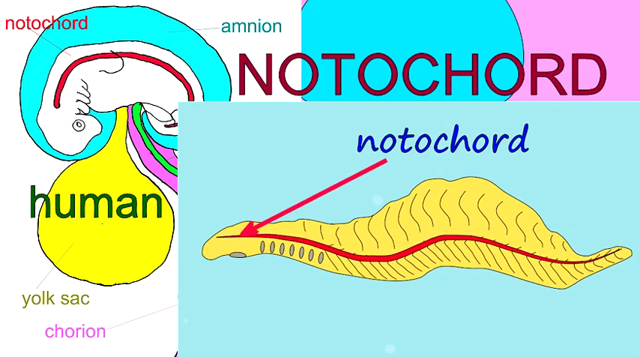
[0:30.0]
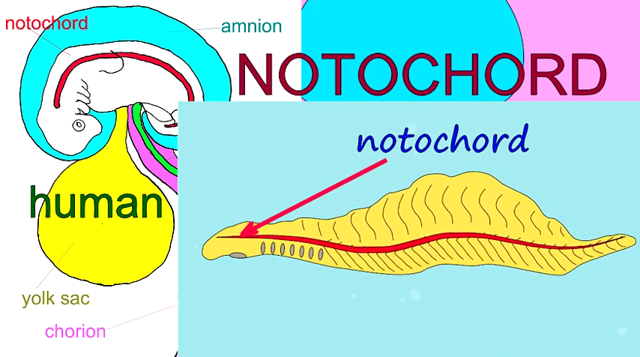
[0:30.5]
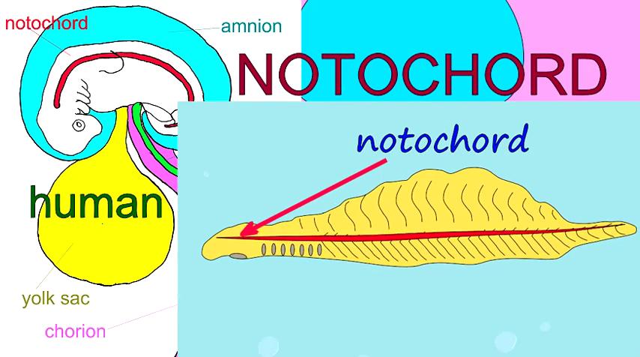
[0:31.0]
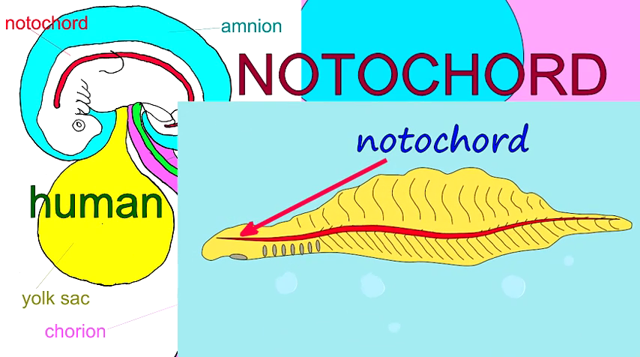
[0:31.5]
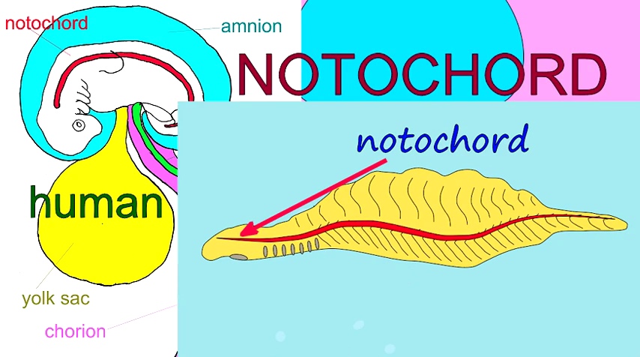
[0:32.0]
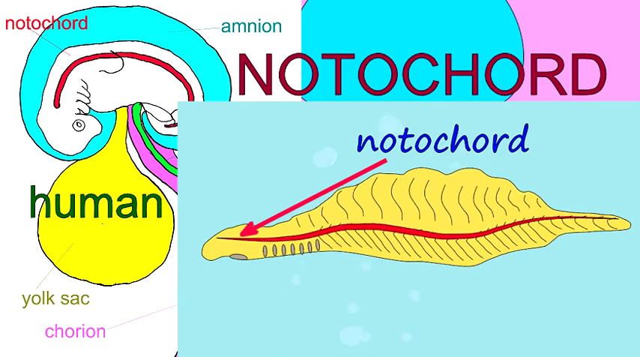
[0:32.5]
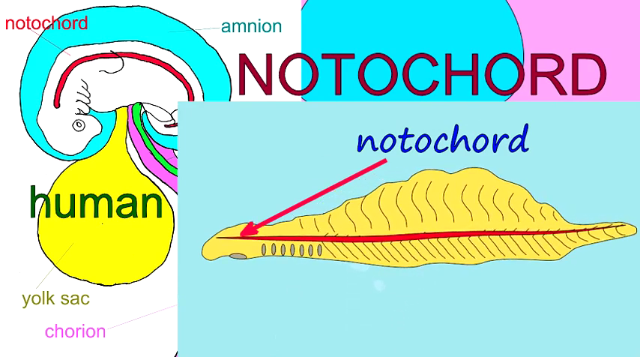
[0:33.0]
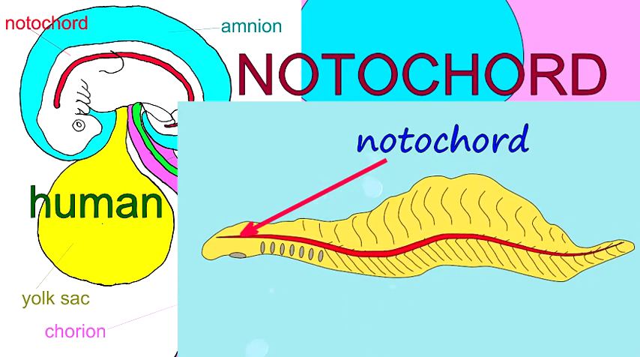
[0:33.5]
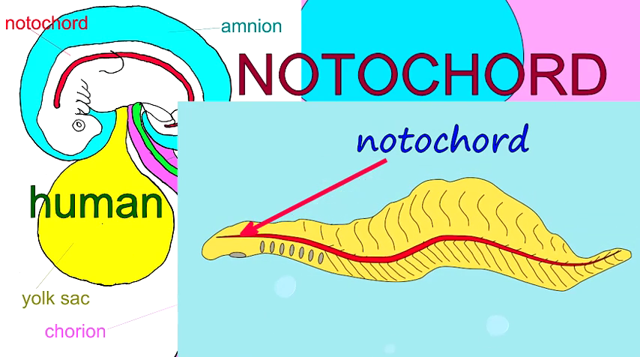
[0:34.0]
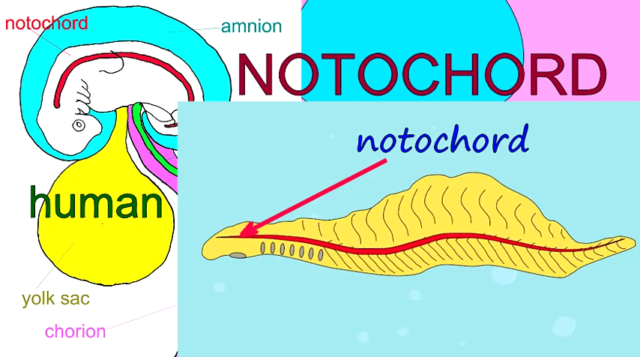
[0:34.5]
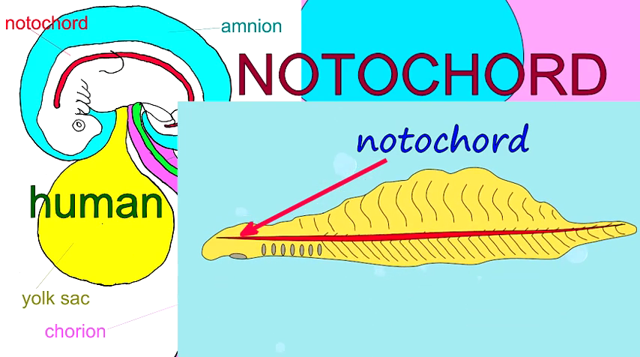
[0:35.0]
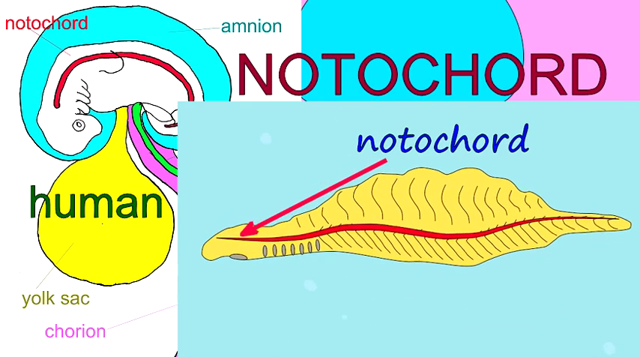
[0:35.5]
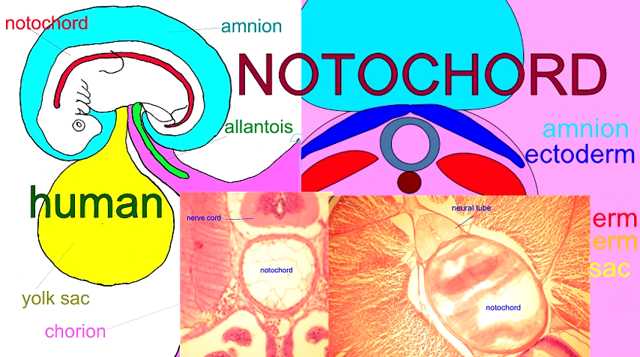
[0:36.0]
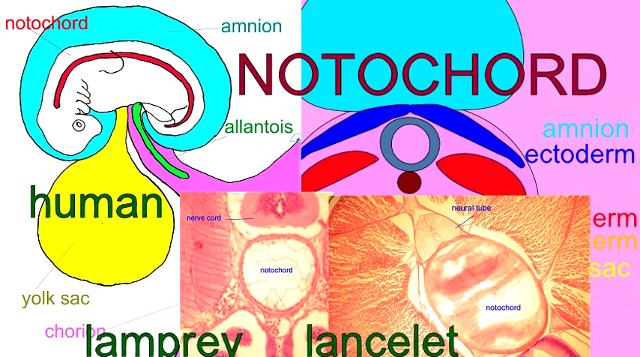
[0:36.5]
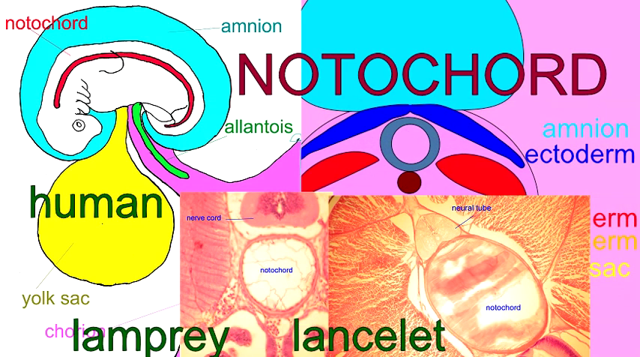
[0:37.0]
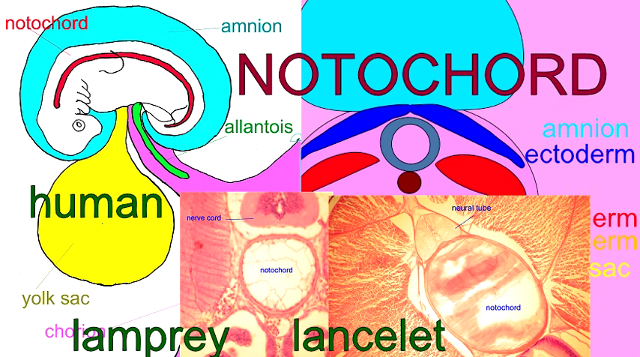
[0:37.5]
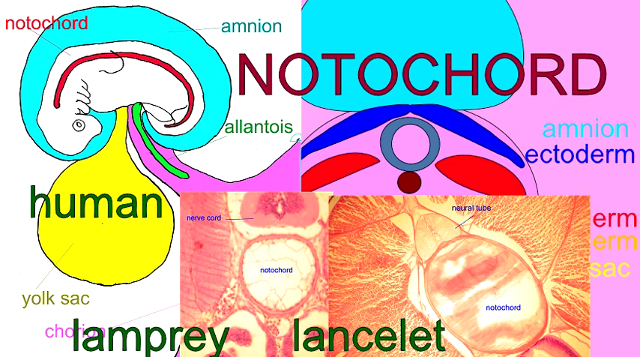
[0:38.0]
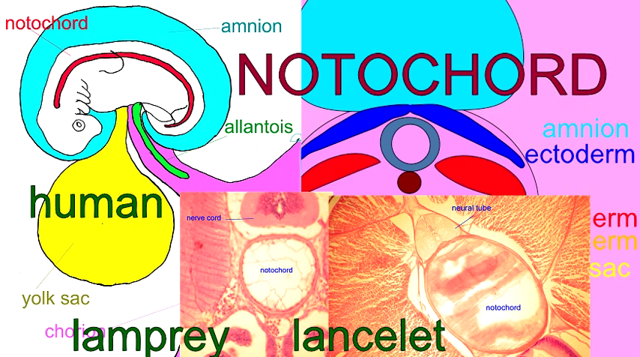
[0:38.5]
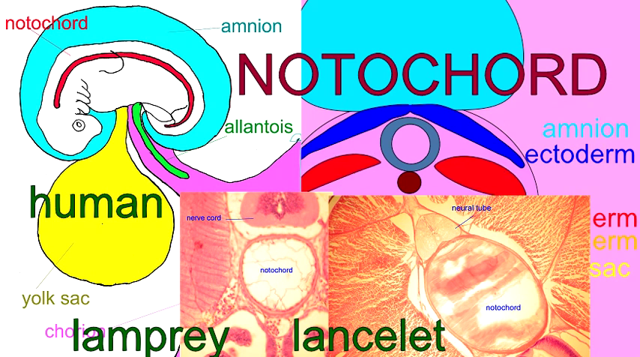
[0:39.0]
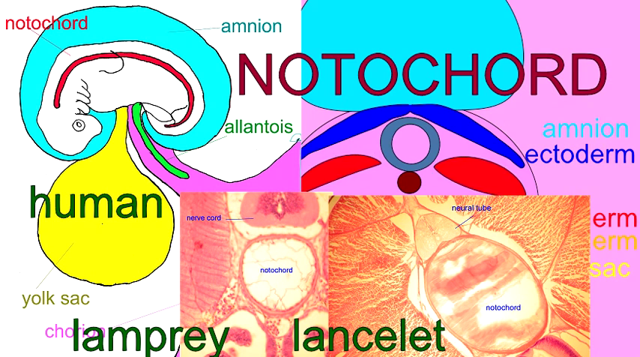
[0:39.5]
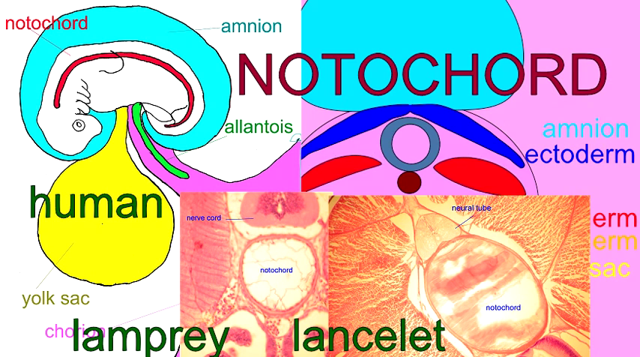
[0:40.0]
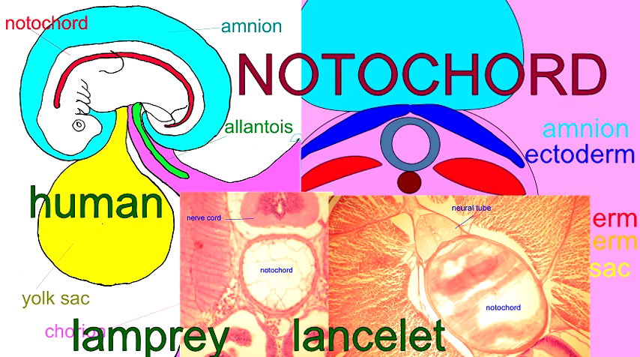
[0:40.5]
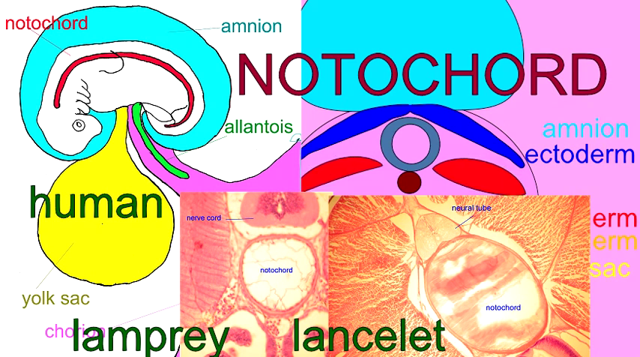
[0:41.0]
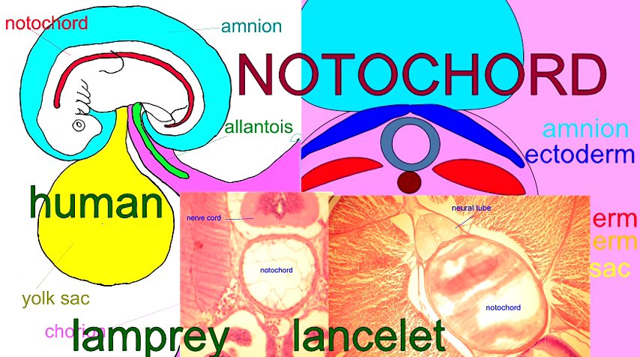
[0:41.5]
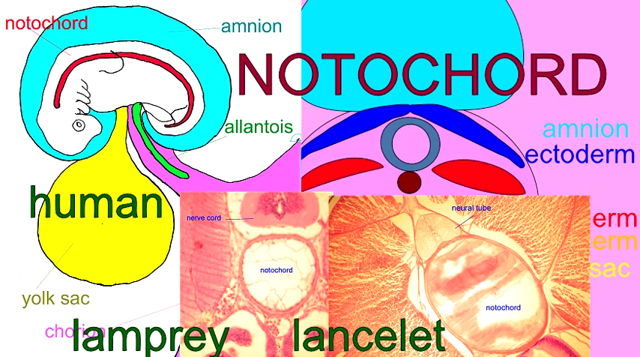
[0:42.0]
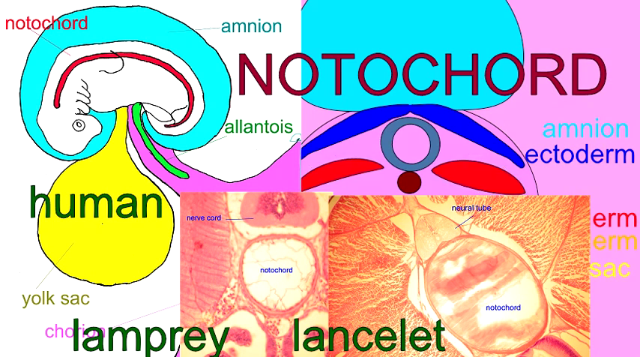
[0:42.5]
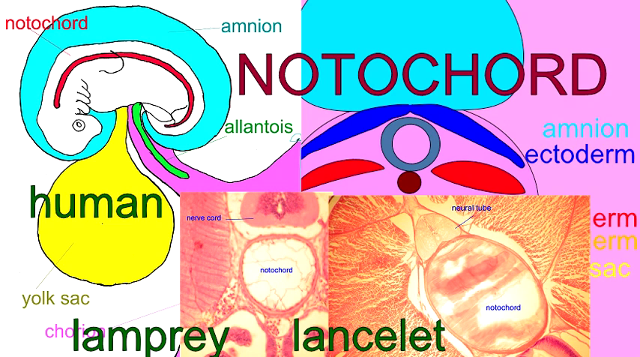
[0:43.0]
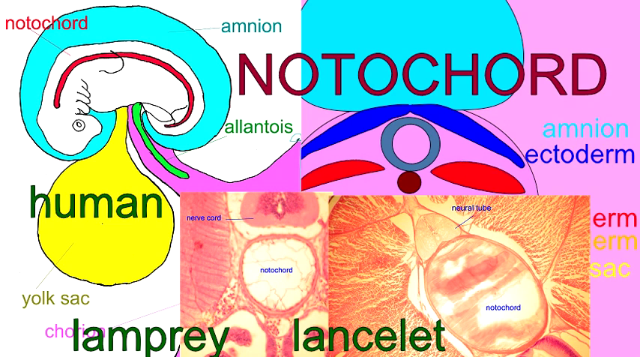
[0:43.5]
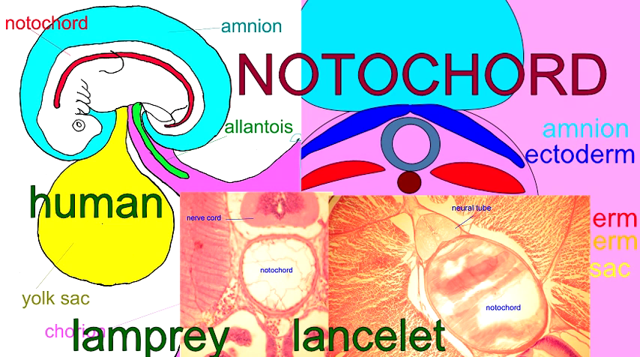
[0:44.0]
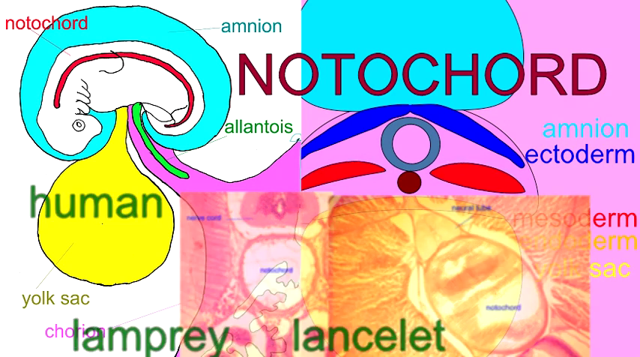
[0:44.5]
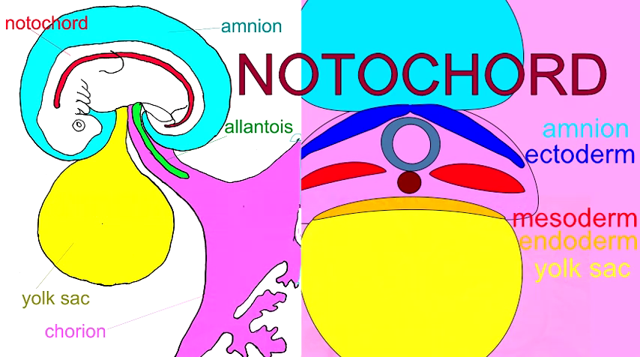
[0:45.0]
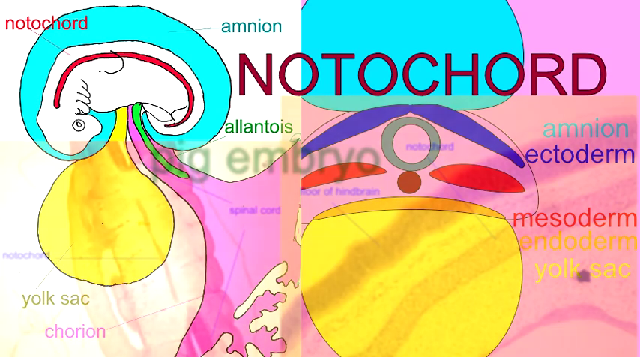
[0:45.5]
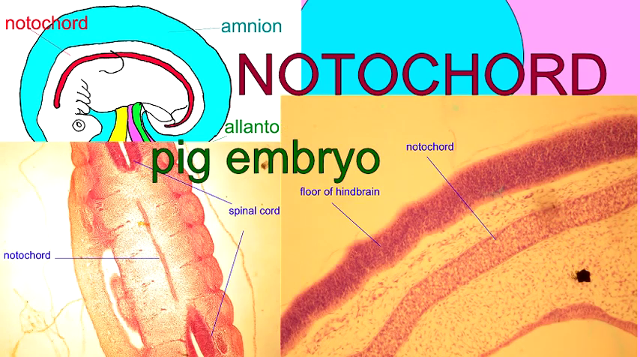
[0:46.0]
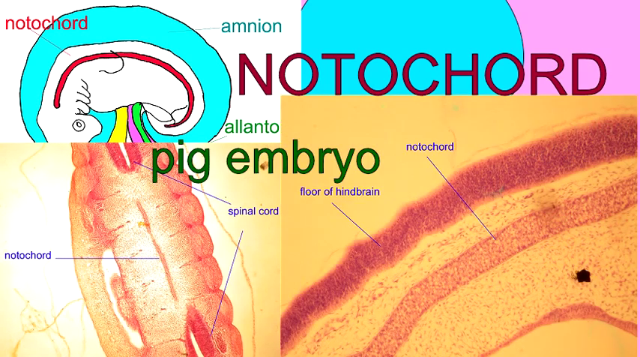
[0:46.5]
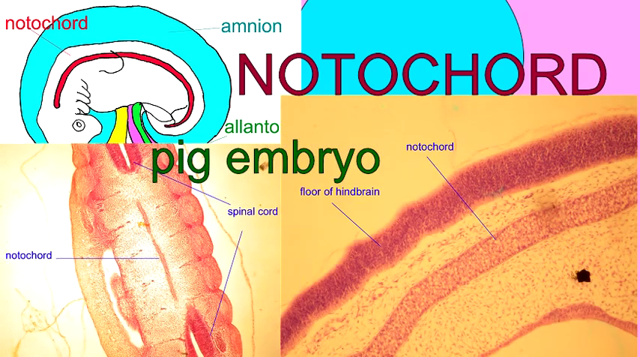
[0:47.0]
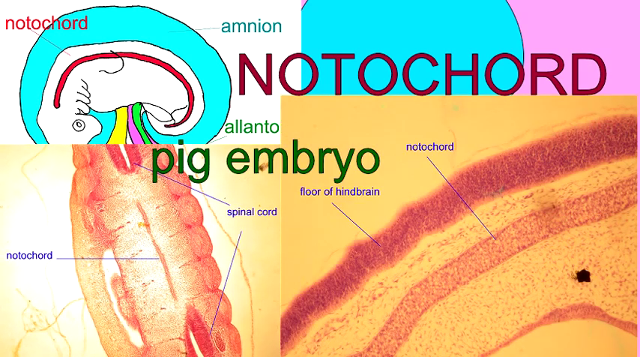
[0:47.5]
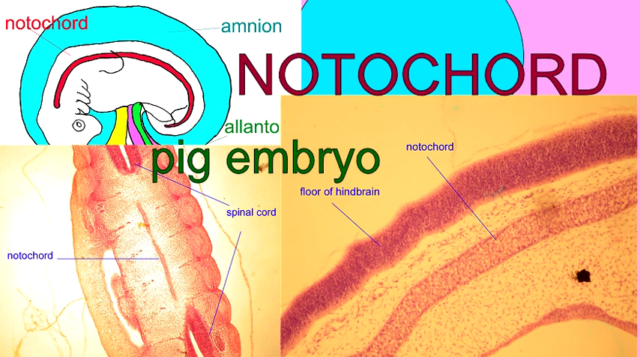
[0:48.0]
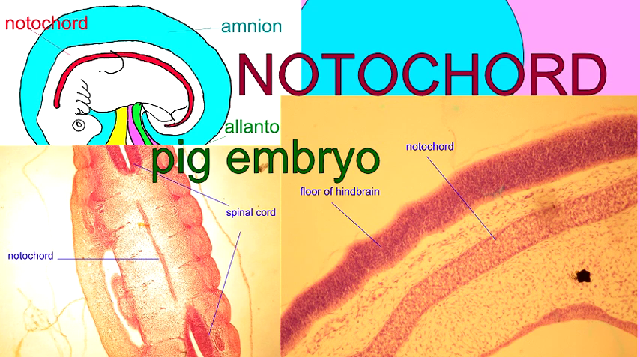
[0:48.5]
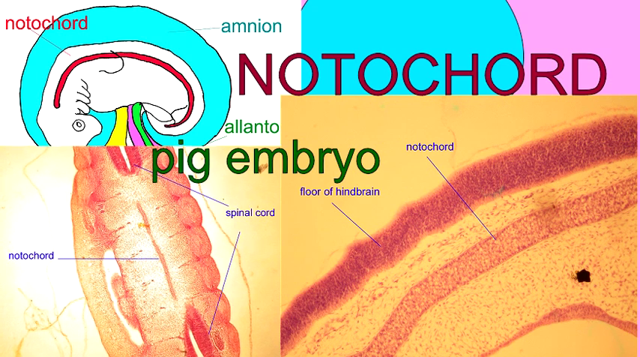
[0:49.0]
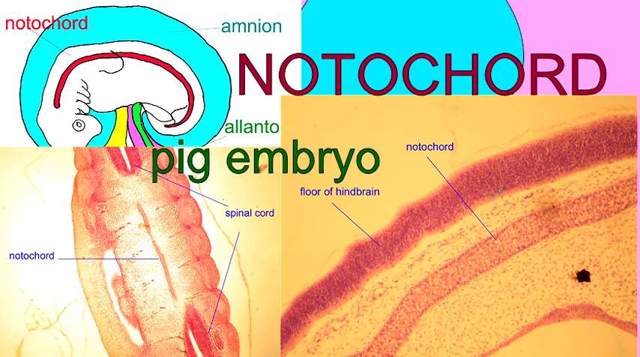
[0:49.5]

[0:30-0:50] A red arrow points to a yellow item lying on the screen; it is the red line running from the front to the back. On the left side of the screen is a human, with the embryo inside the body. The aminos is shown around the embryo, and inside it is the notochord in red. Below, an arrow points to the yolk sac. A different type of picture follows, one seen under a microscope. On the right-hand side it points to a neural tube, and on the left side the nerve cord and the notochord are listed on the screen. Next comes a pig embryo. On the left-hand side, arrows point to the spinal cord and the notochord, which is again a red line running down the middle. On the right-hand side, the notochord is shown up close along with the floor of the hindbrain that it points to, both red on the screen.